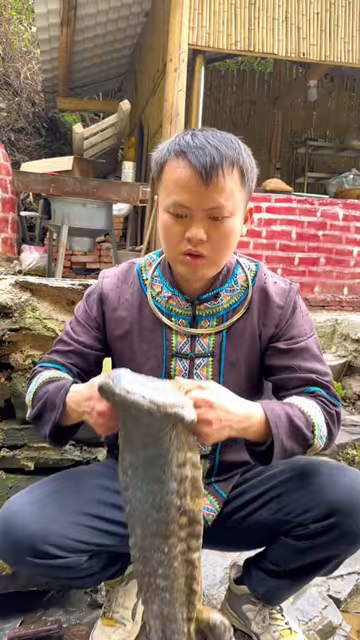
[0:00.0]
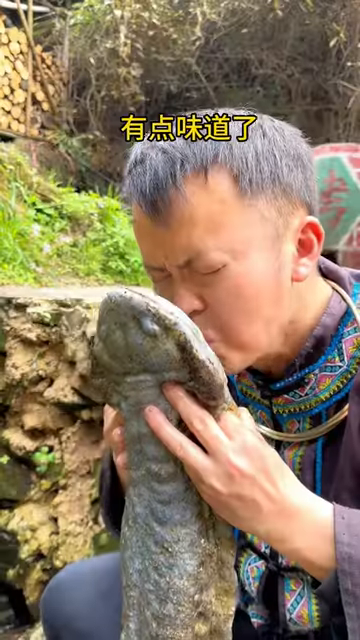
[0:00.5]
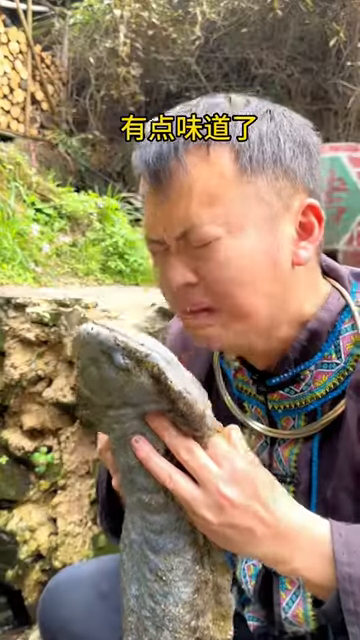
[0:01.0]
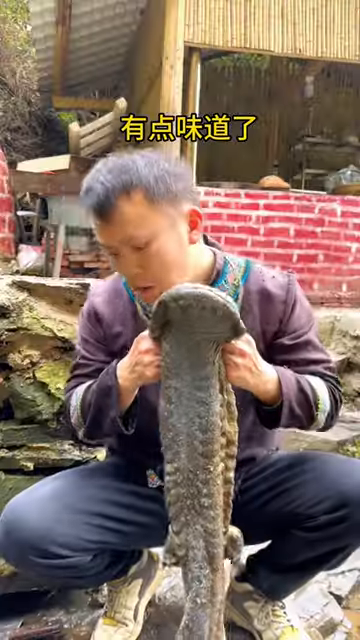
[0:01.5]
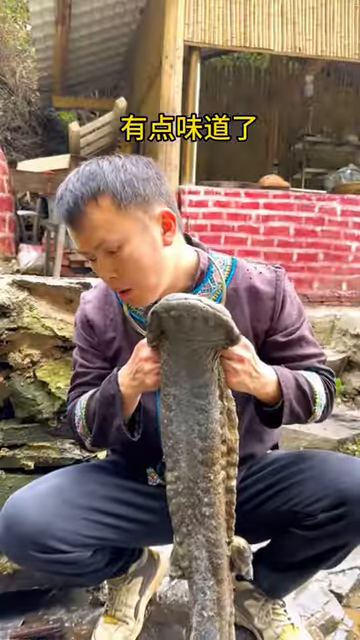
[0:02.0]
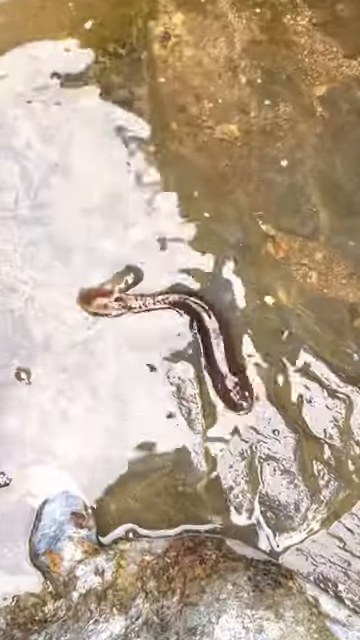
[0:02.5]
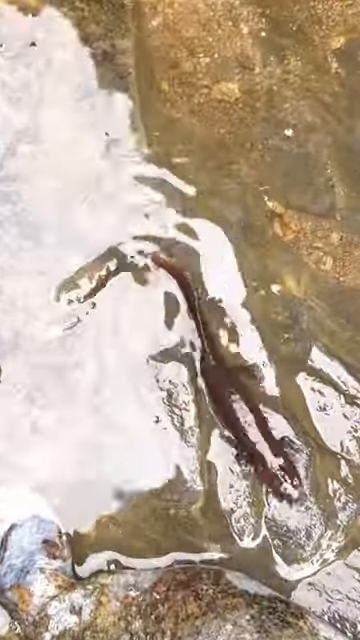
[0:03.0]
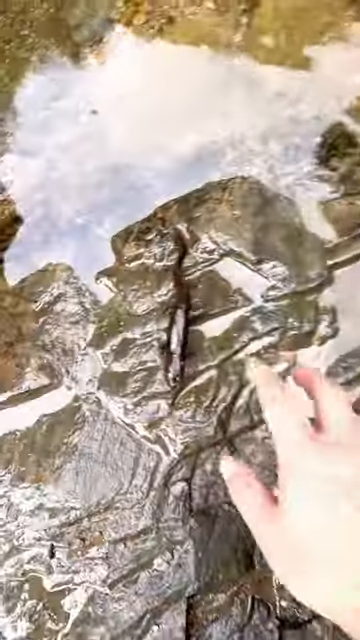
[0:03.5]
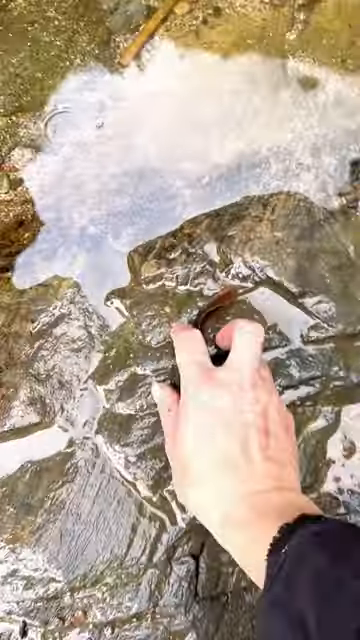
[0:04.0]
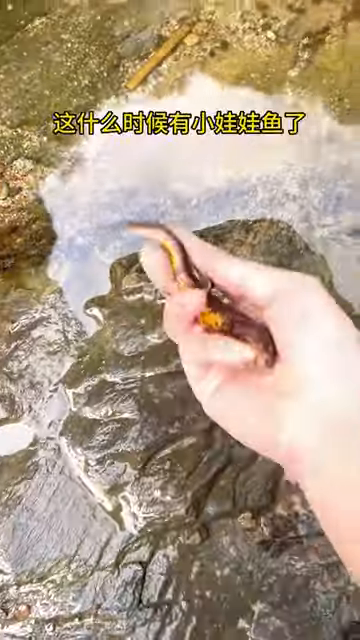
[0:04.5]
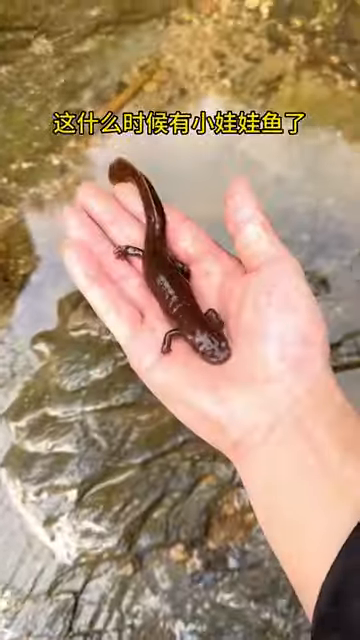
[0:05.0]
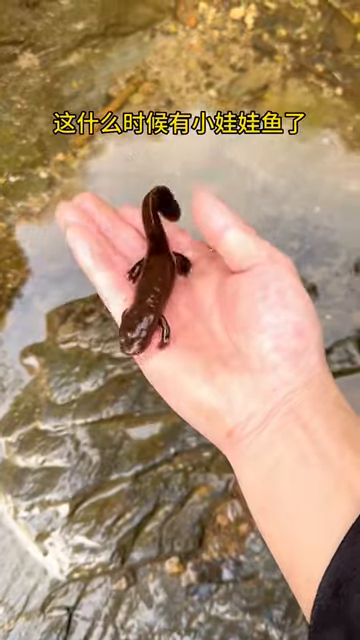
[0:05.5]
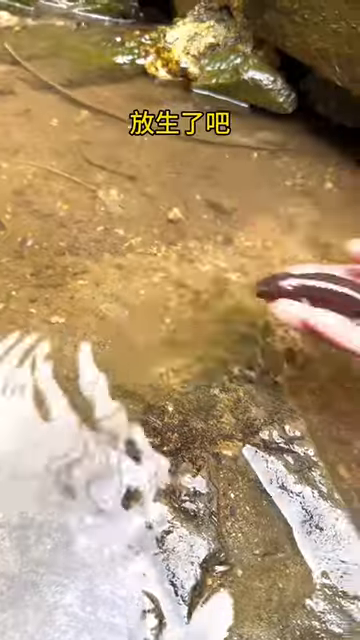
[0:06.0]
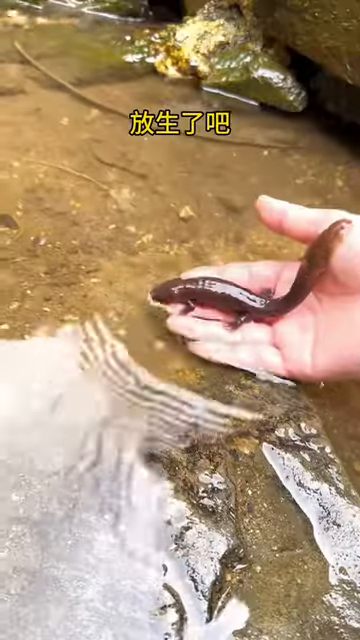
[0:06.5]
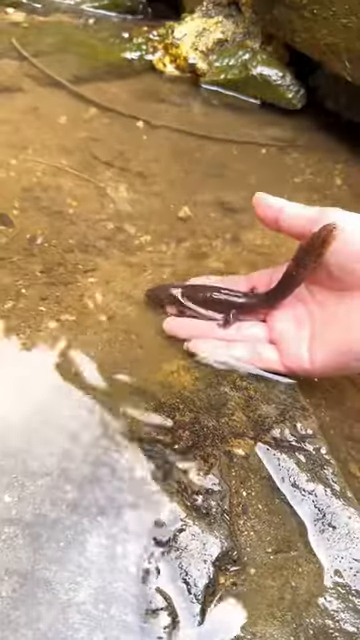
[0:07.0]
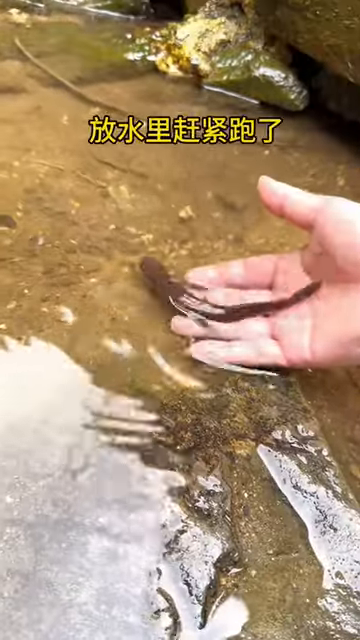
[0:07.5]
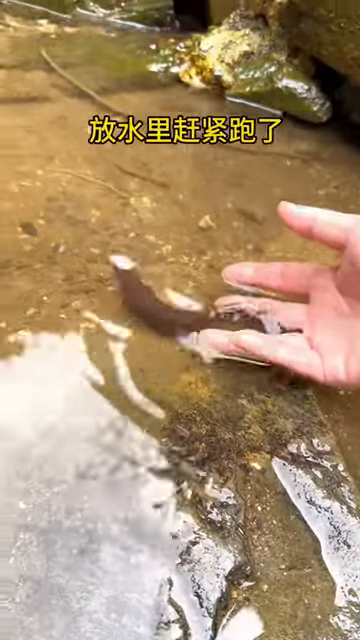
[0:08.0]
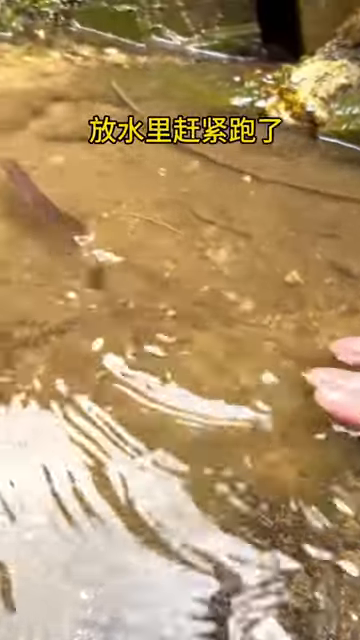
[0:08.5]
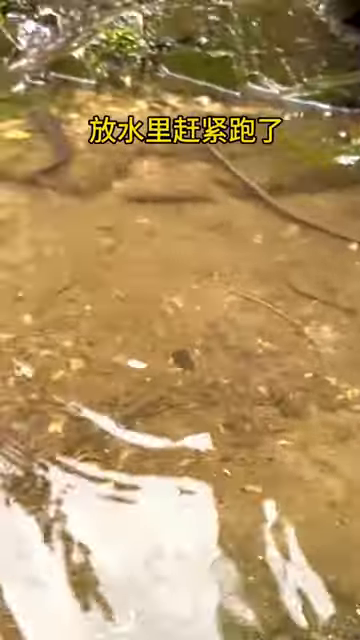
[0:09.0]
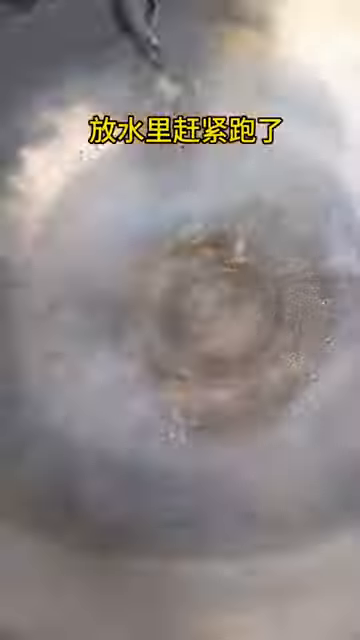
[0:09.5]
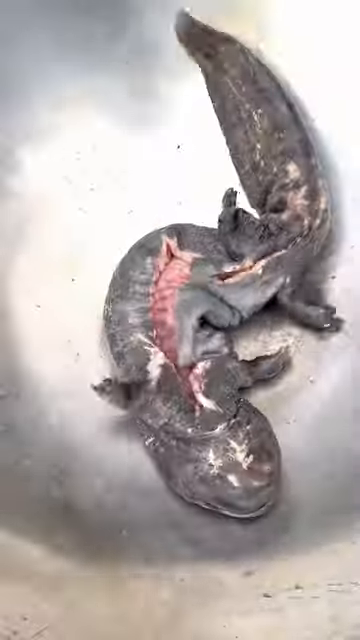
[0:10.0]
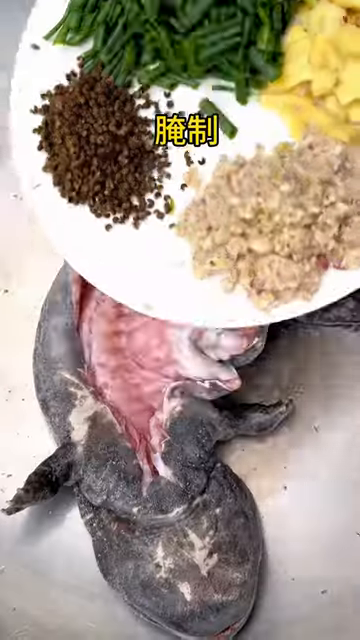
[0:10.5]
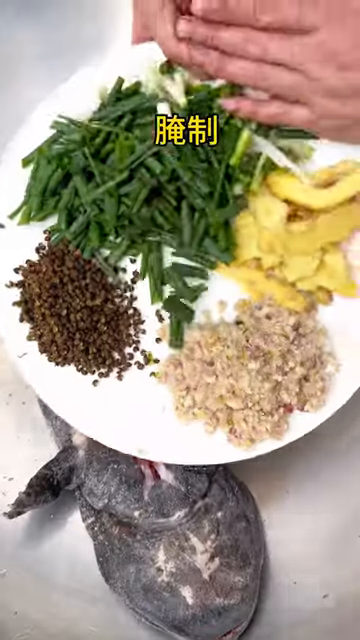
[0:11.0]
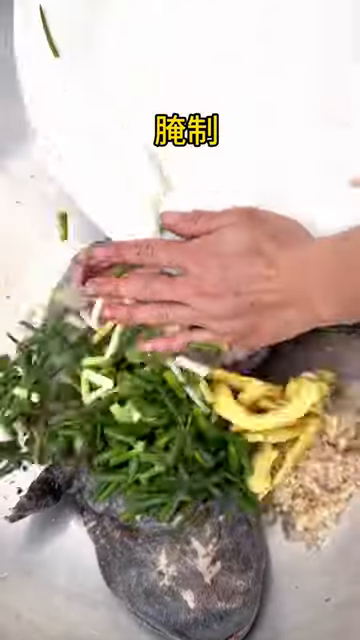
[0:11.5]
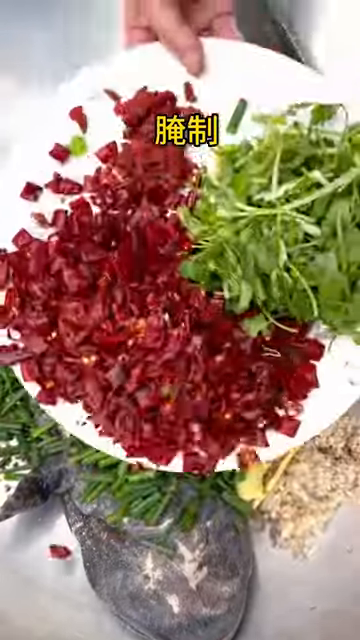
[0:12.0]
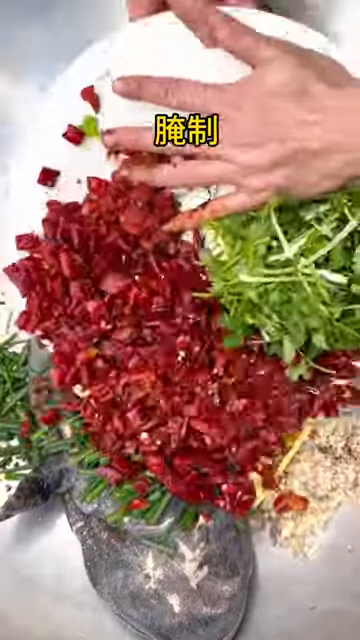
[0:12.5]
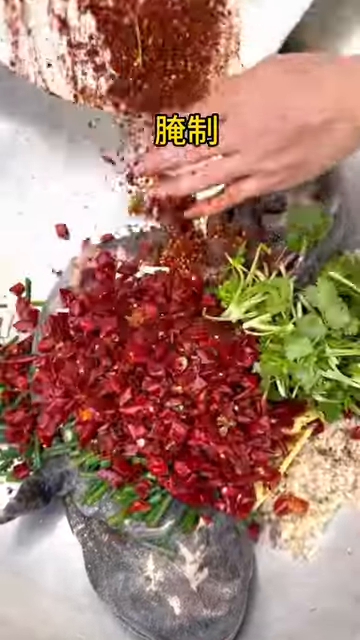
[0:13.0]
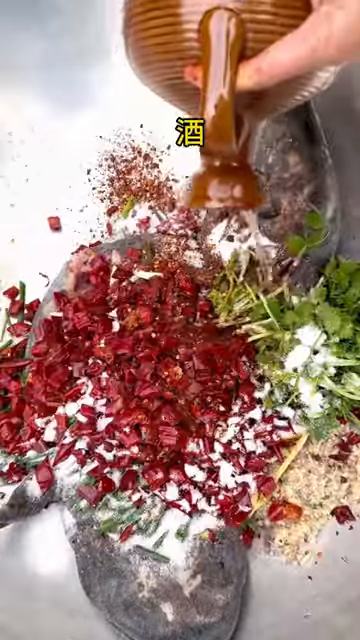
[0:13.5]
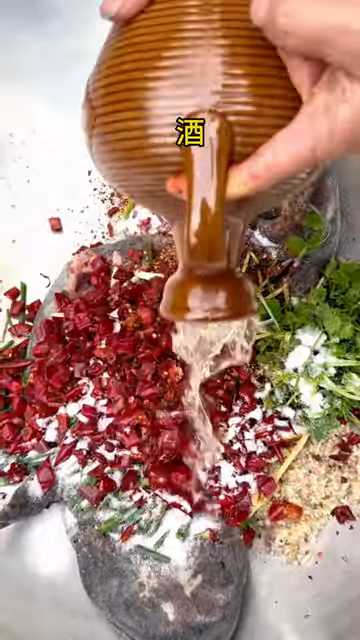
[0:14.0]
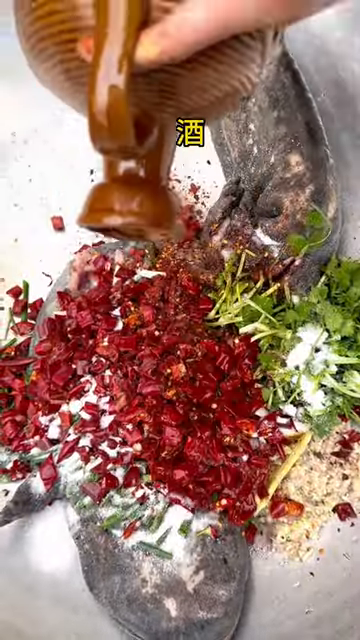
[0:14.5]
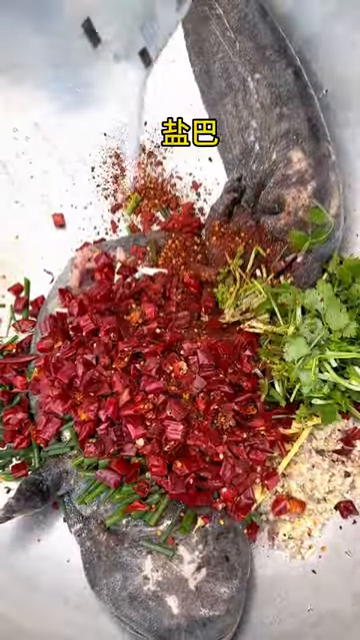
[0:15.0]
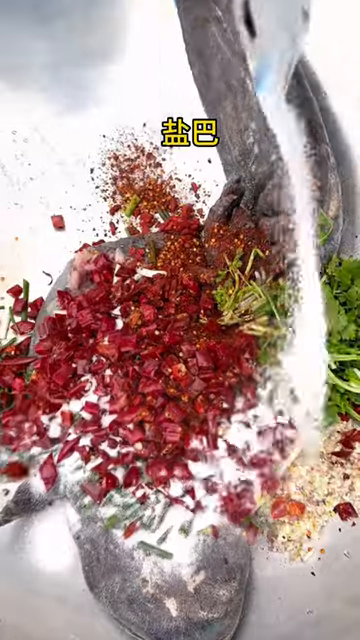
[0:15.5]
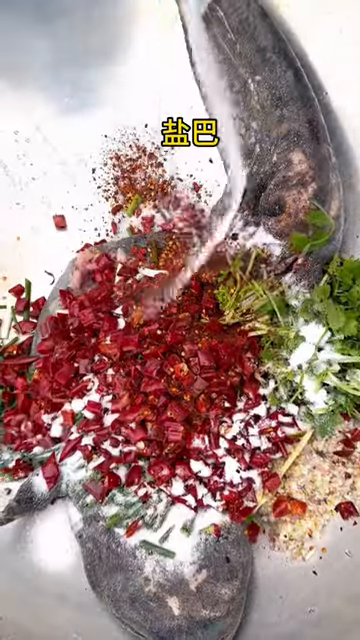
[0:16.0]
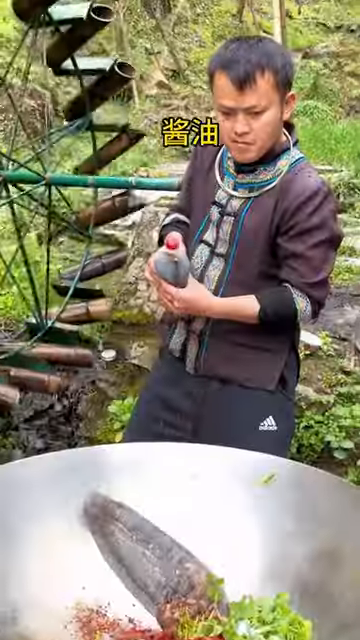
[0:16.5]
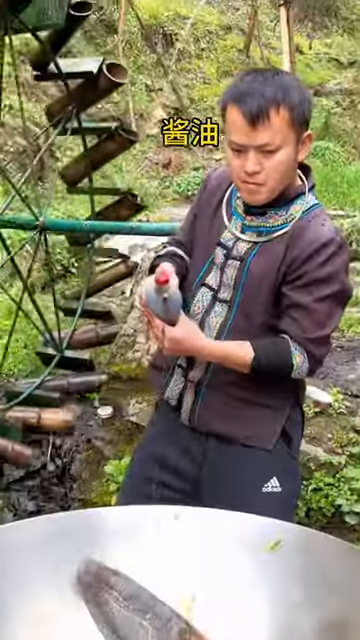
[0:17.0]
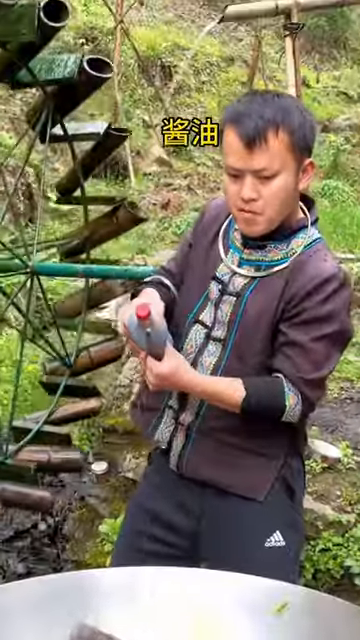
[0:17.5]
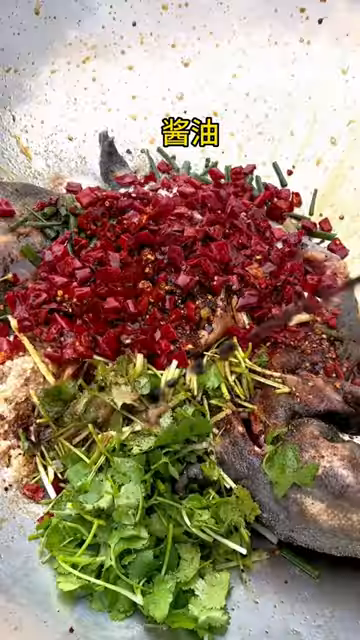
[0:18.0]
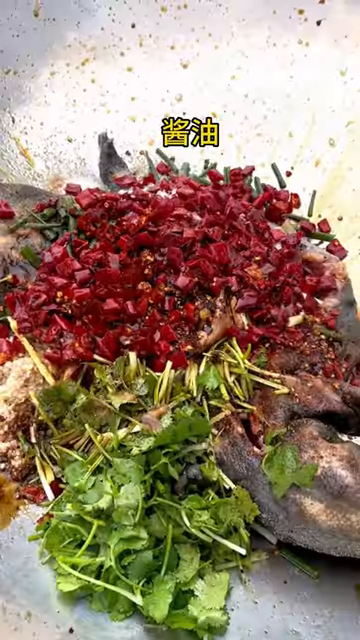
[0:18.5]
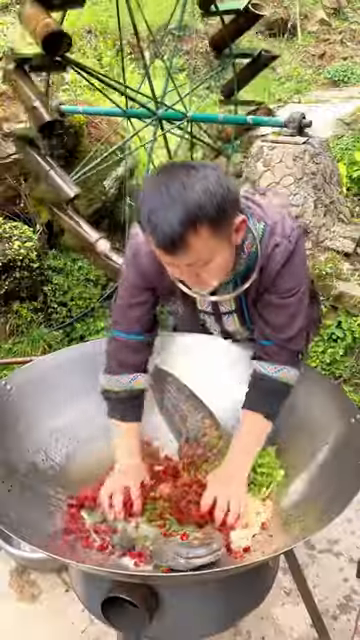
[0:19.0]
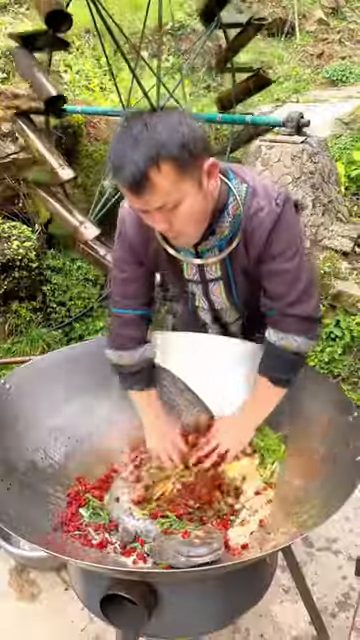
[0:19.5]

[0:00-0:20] A Chinese person holds a large salamander that he is about to cook with soy sauce, coriander and other chopped vegetables. The salamander he holds is very large, about the length of a person's leg. He sniffs it and makes a face as if it does not smell too good. The man also picks up a small salamander from a creek and lets it go. The very large salamander has been gutted and is put into a large wok outside a rural-looking brick building. The man wears a traditional costume, a Chinese-style jacket with ethnic banded trims. After putting in the chopped vegetables, he douses the ingredients over the salamander's body with soy sauce and cooking oil. Some Chinese text is shown on screen, likely describing the ingredients used.